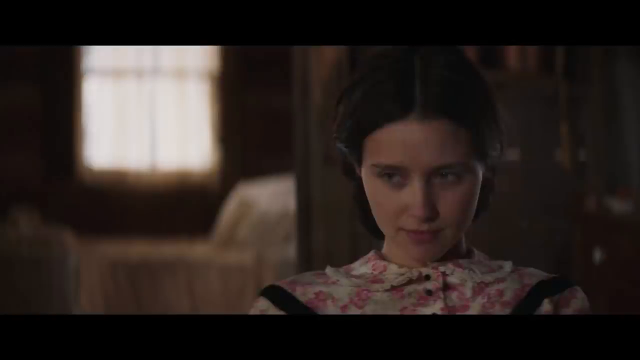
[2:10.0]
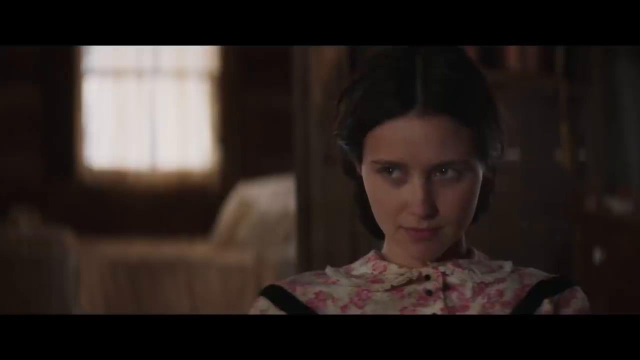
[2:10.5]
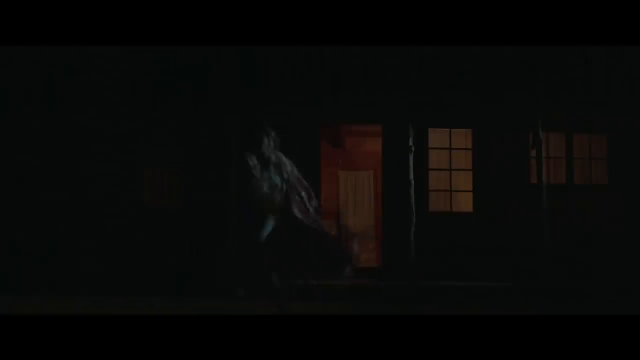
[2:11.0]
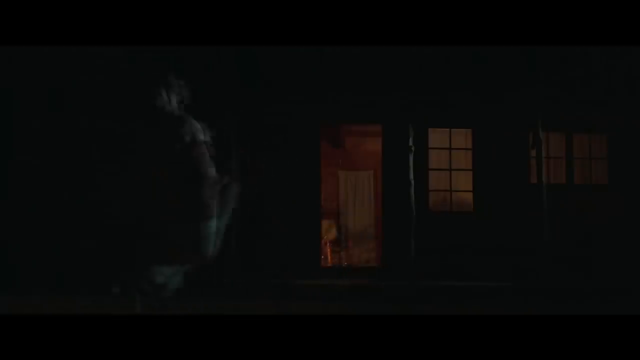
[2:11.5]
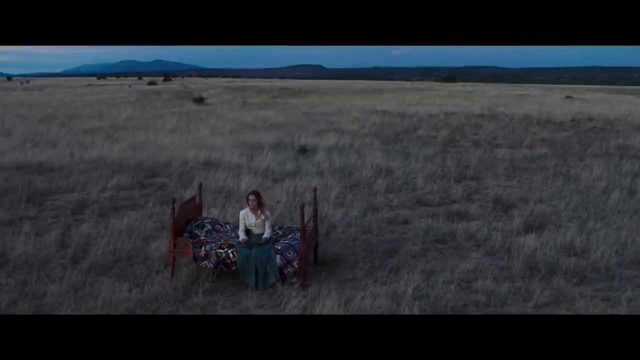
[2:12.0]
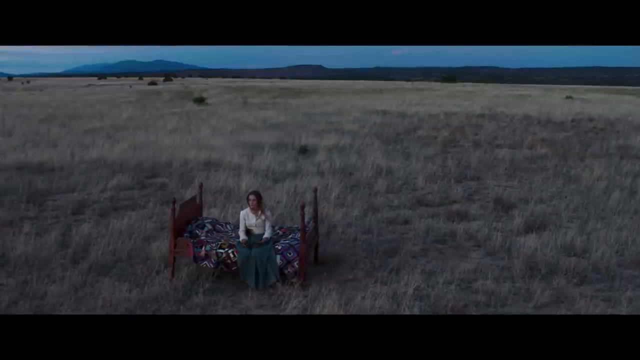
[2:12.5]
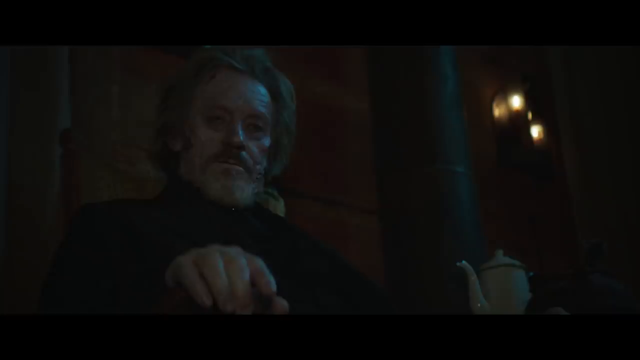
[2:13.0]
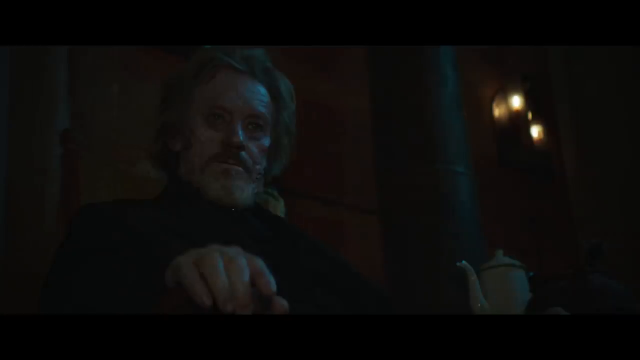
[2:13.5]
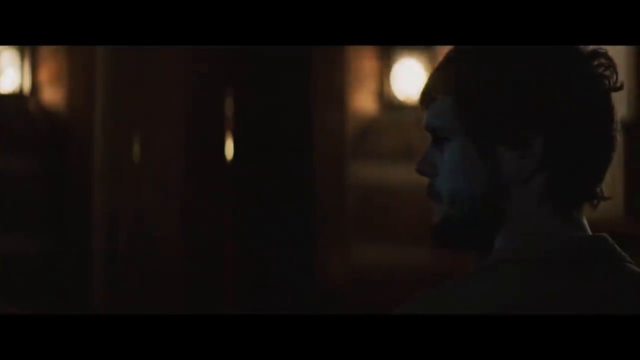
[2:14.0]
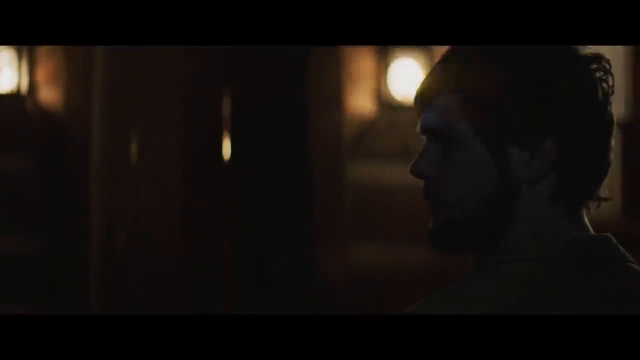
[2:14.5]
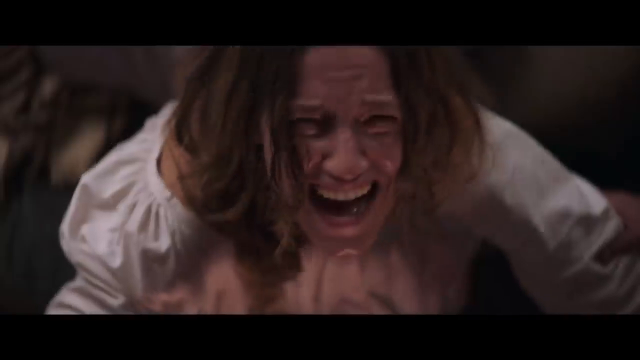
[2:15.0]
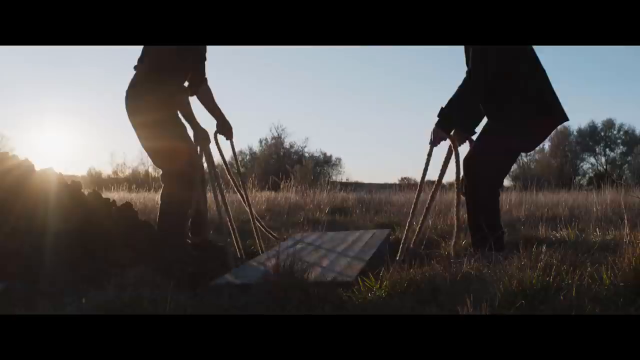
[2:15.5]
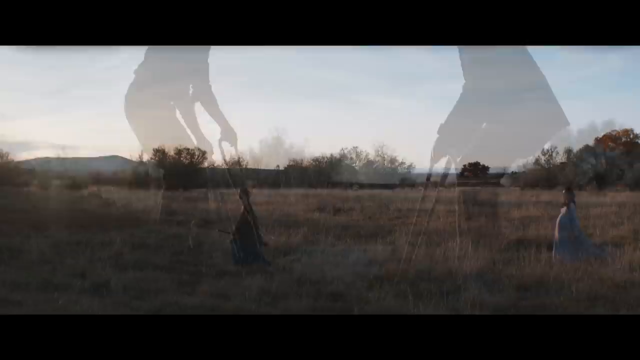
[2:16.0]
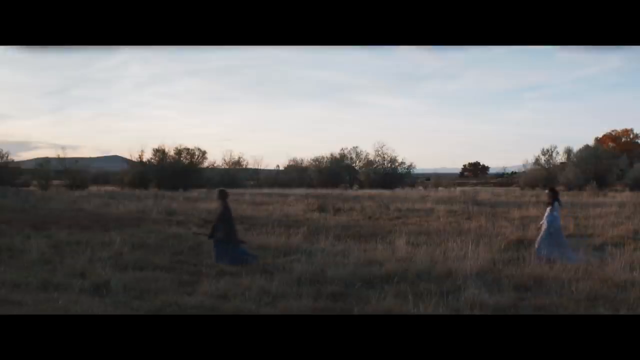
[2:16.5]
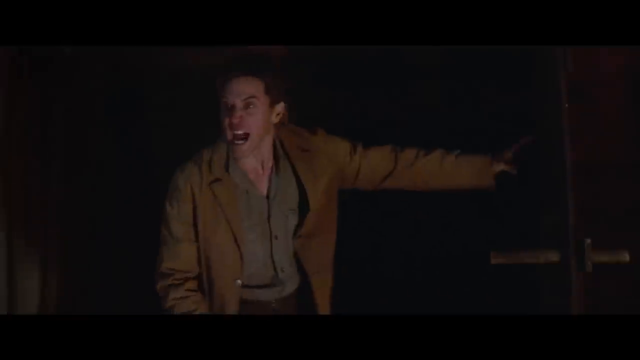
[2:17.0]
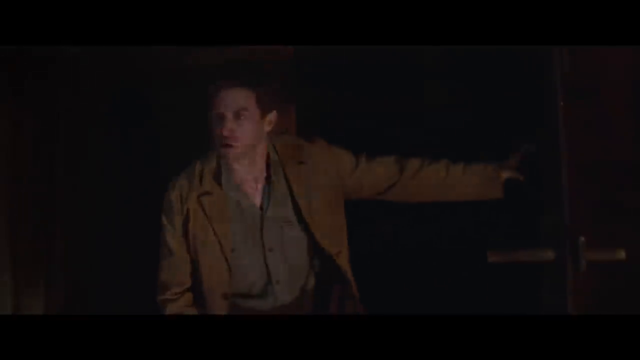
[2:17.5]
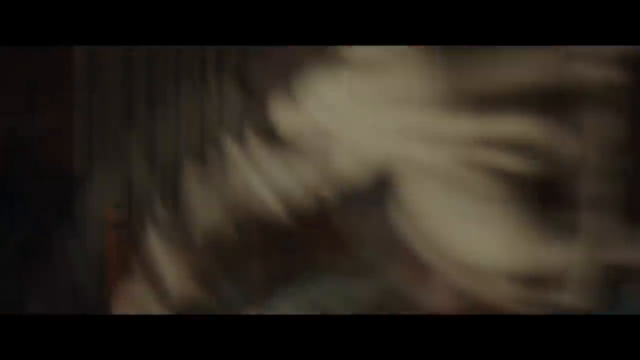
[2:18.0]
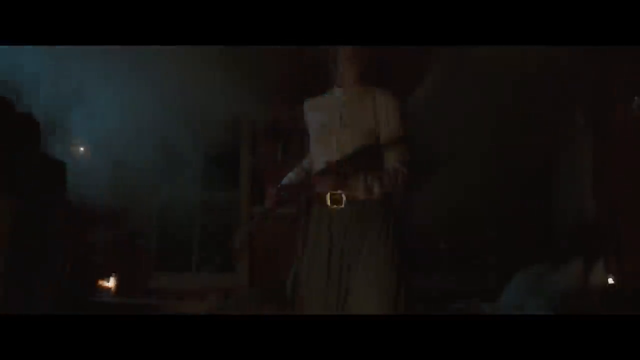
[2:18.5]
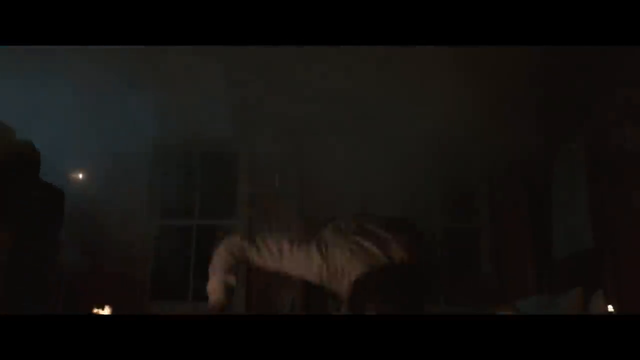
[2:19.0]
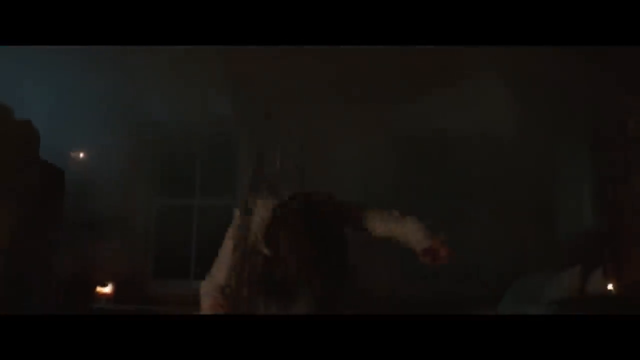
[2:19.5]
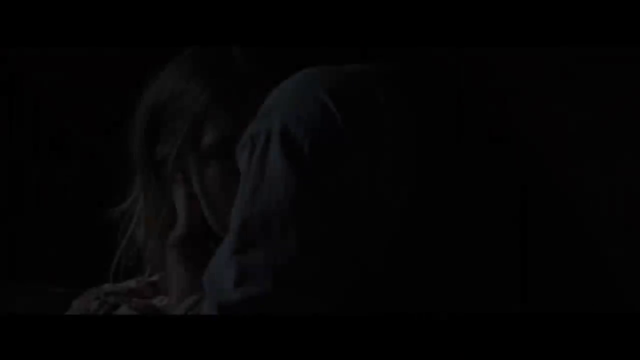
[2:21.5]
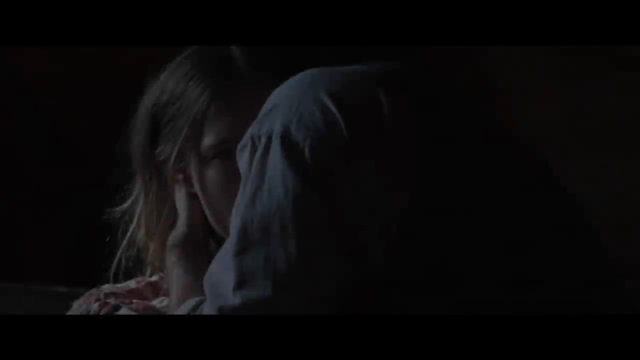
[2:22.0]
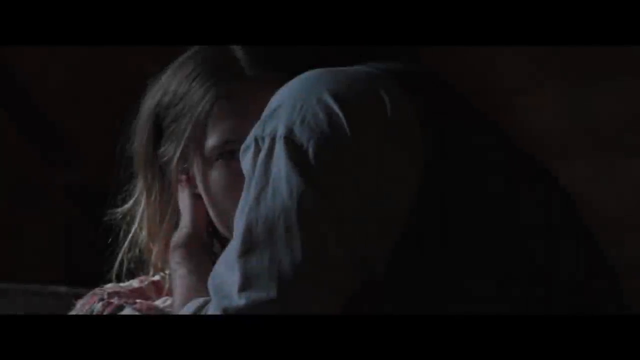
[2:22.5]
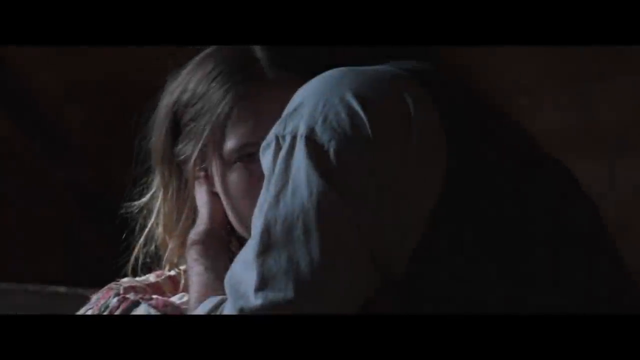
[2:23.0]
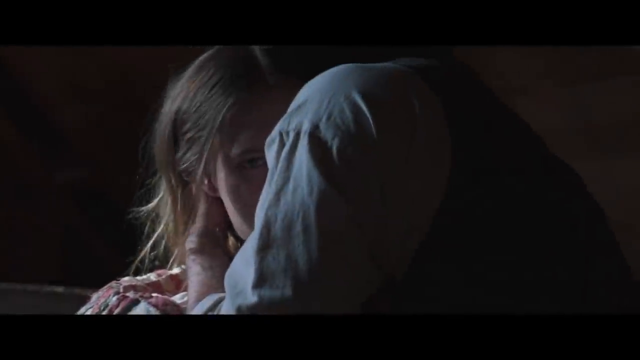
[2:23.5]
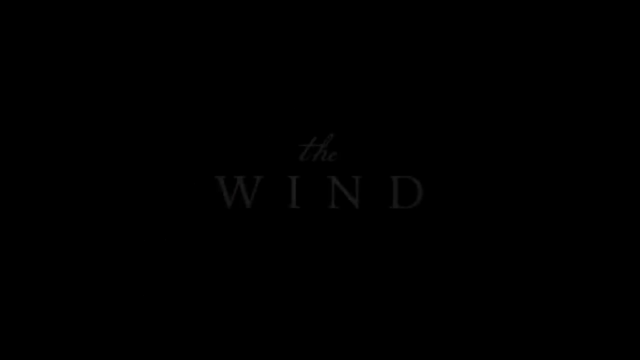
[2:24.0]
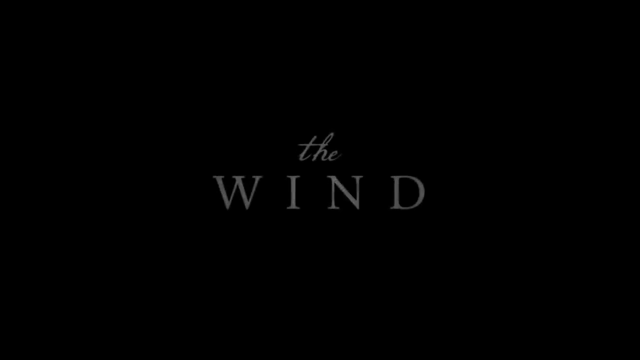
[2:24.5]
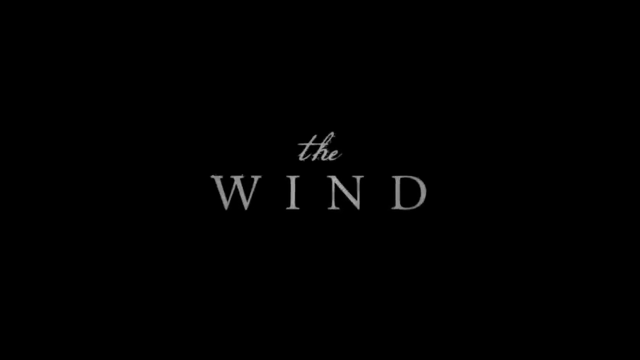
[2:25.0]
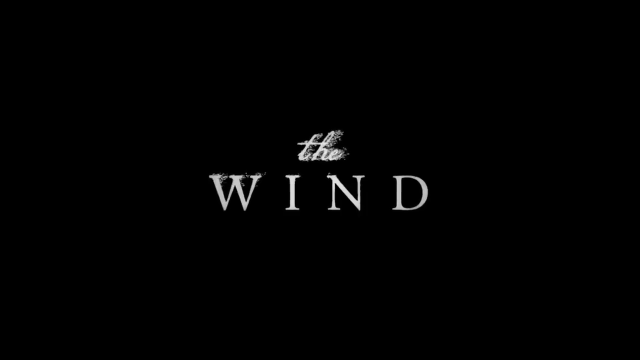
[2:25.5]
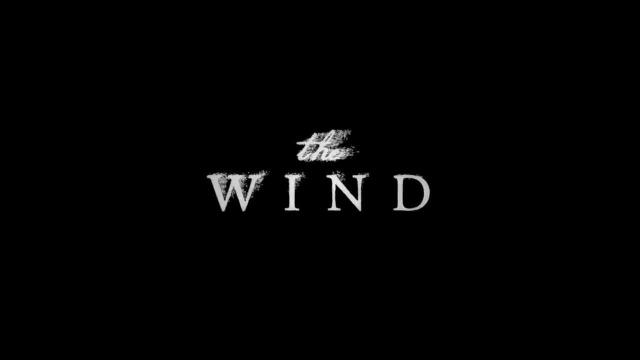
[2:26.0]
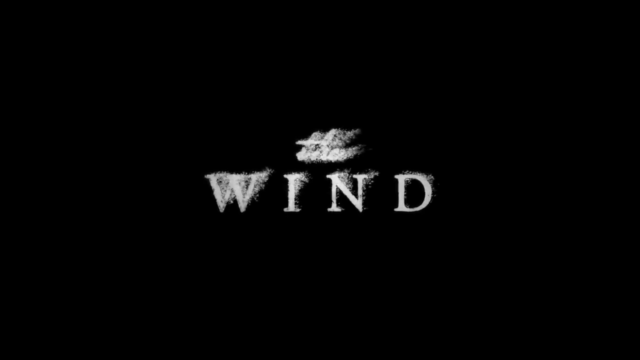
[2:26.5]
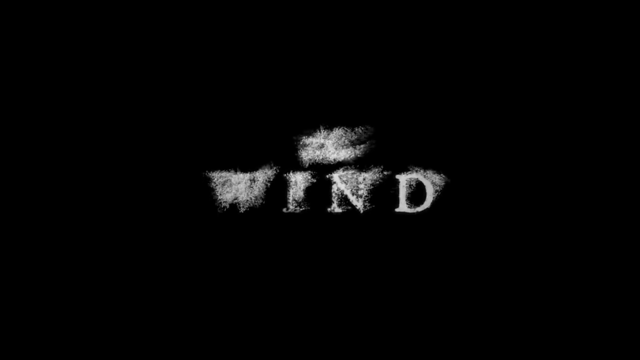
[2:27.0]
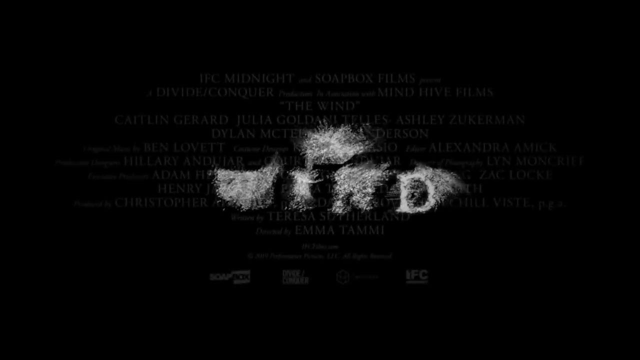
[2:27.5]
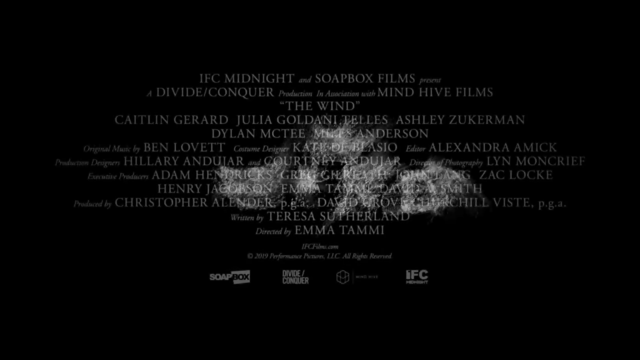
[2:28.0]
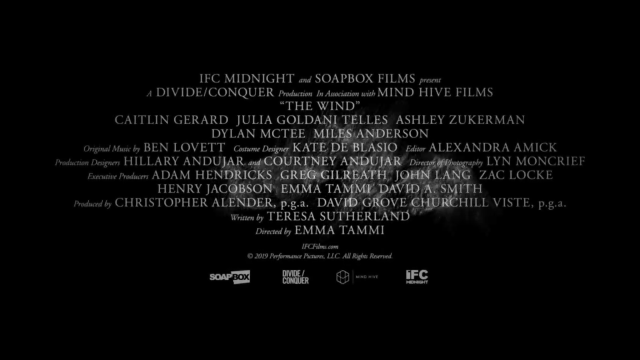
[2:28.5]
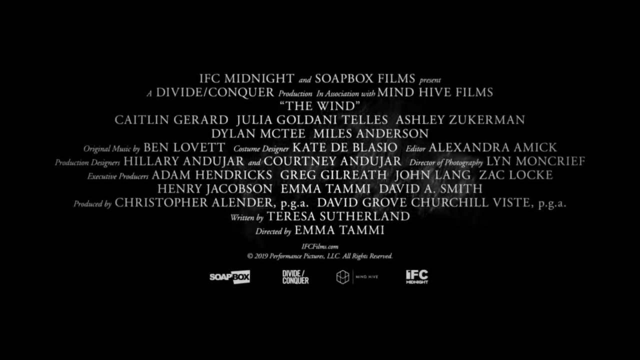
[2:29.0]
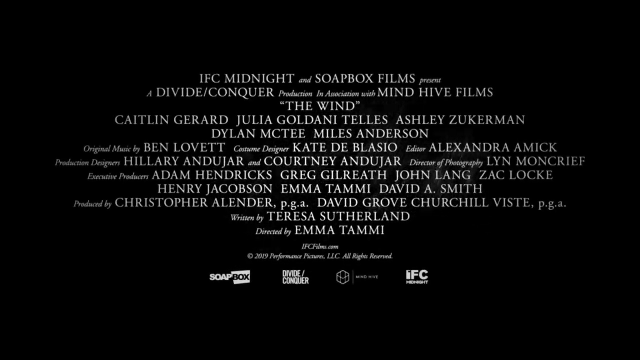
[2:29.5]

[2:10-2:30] The darker-haired woman looks prim and proper, not disheveled or dirty, wearing floral, fancier clothes, and sits in a room. The shot cuts to a woman running from a house in the moonlight; the window and doors with light are in the background, but otherwise it is dark. Next, the woman with dark brown hair, in a white coat-like top and a grayish-blue skirt, sits on the prairie with hills and mountains in the background and dry grass, sitting on a single mahogany or cherry-type four-post bed with a dark patterned comforter or something similar. A quick shot shows the man who looked like the priest, now looking very demonic and disheveled. A man with a beard, facing away from the camera, looks to his left as if looking around at what is going on. The woman with the lighter brown hair, in a white nightgown, is crying. A wooden box is lowered into the ground. The two women walk, the brown-haired woman in front and the woman with dark brown hair probably a couple of meters back, following her. The shot cuts to a man in a yellow or tan leather overcoat with sage green underneath, looking frantic. The lady with the light brown hair holds a gun. The shot cuts to a woman holding what looks like maybe a child, and text reads "the wind."